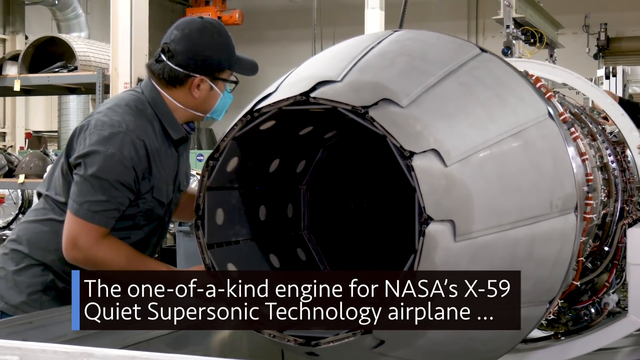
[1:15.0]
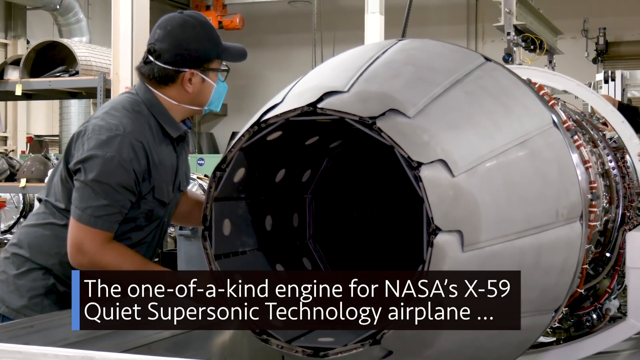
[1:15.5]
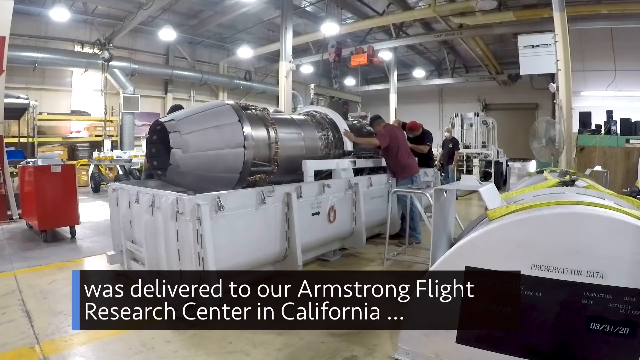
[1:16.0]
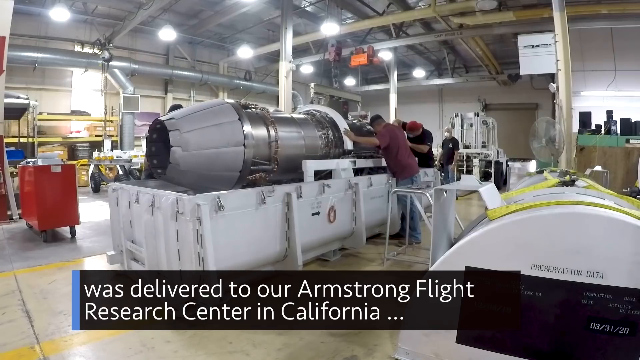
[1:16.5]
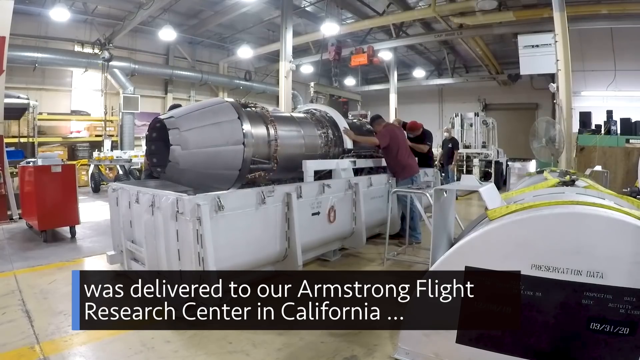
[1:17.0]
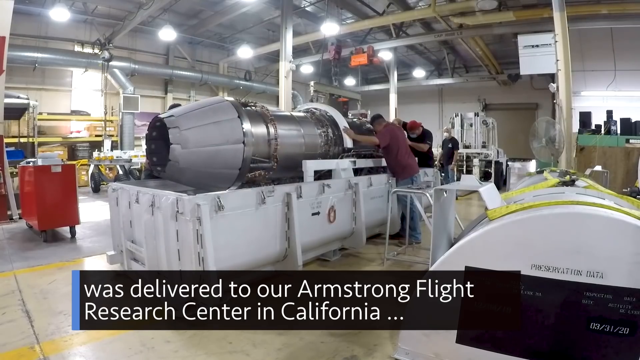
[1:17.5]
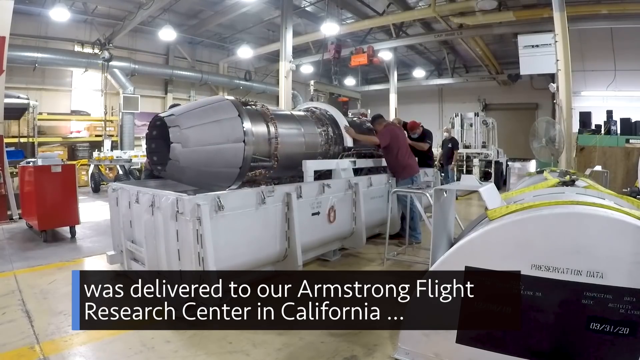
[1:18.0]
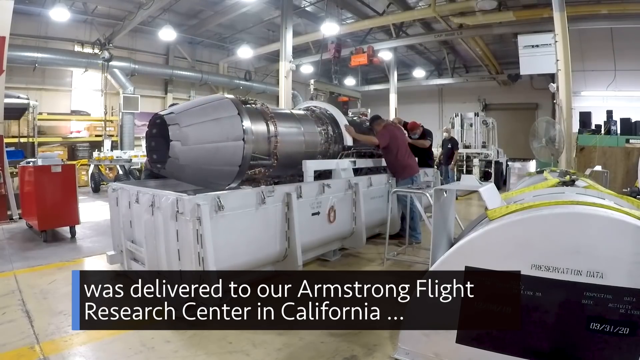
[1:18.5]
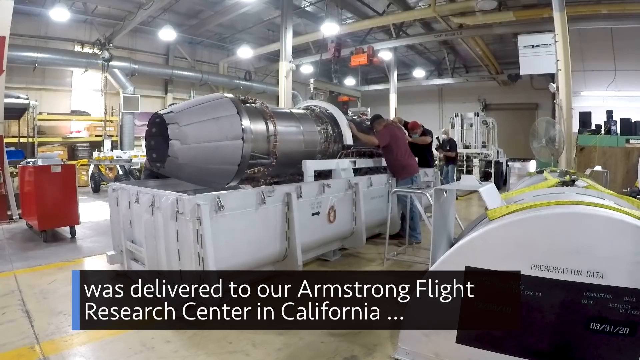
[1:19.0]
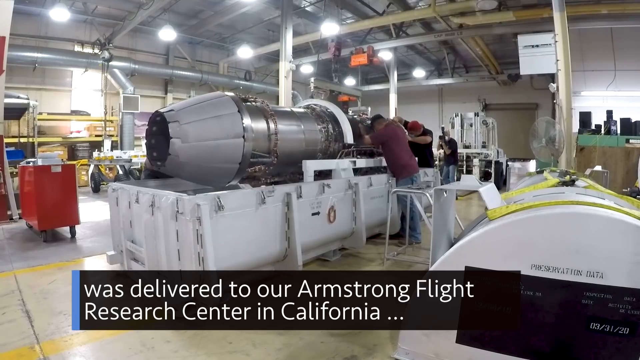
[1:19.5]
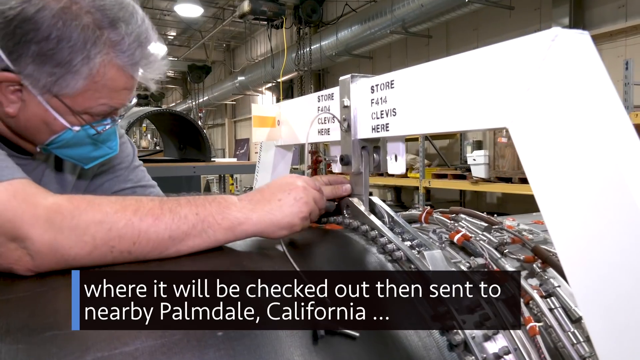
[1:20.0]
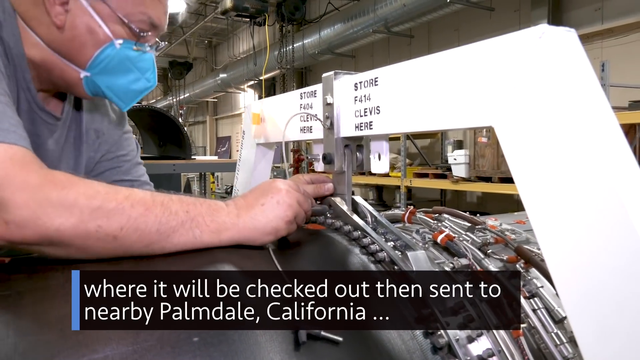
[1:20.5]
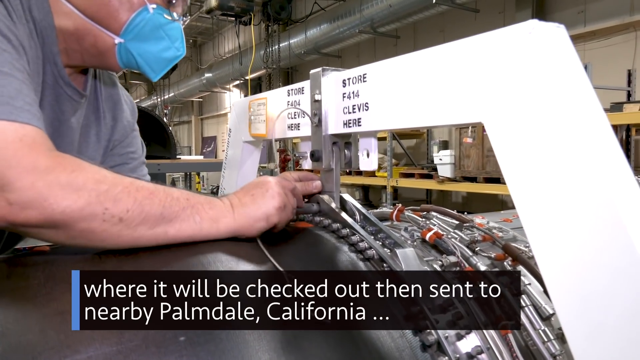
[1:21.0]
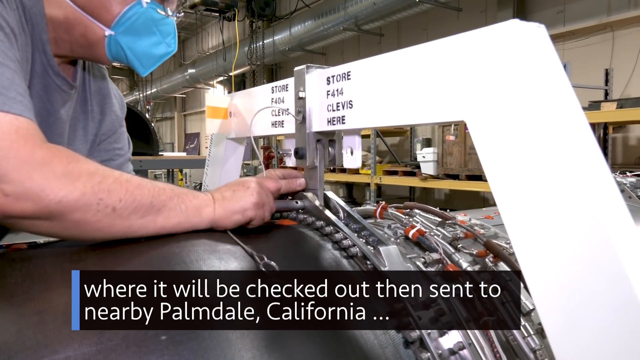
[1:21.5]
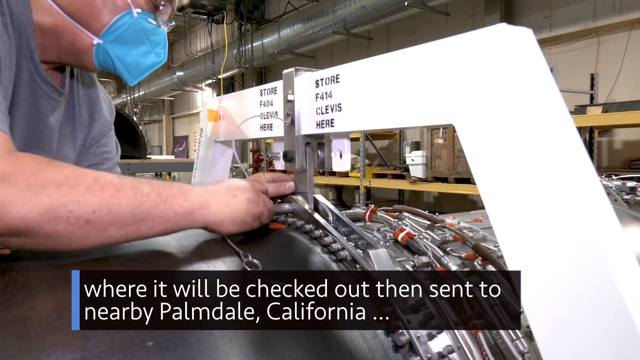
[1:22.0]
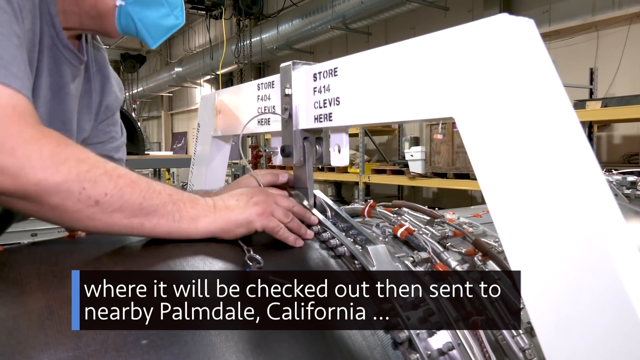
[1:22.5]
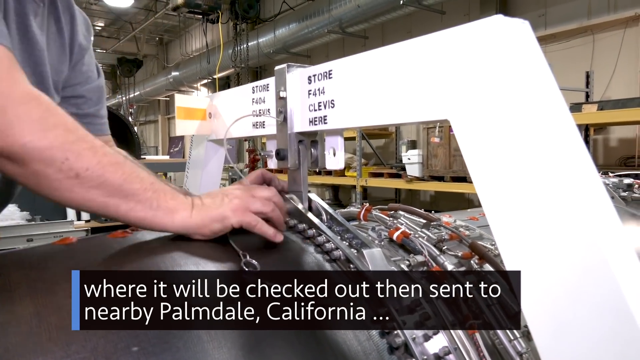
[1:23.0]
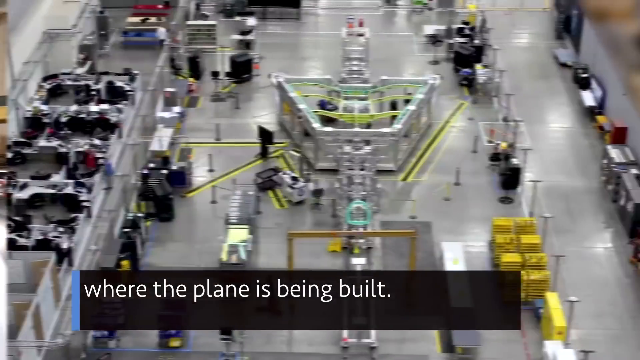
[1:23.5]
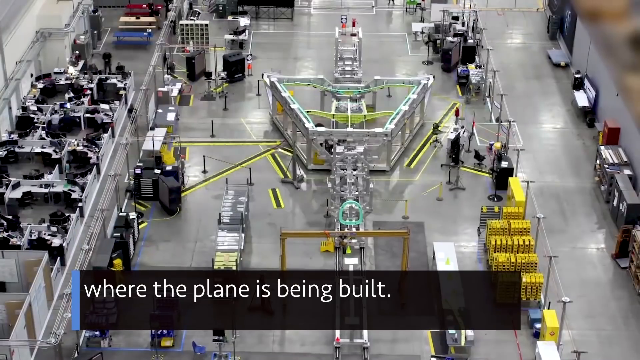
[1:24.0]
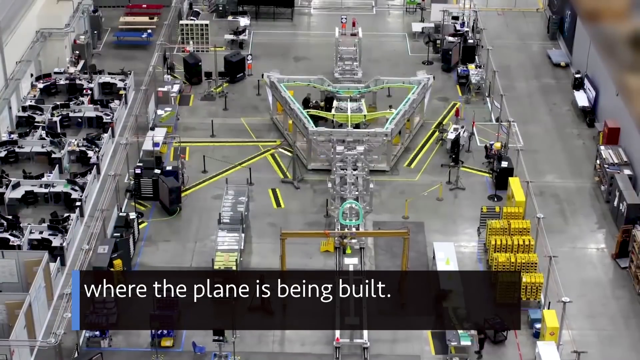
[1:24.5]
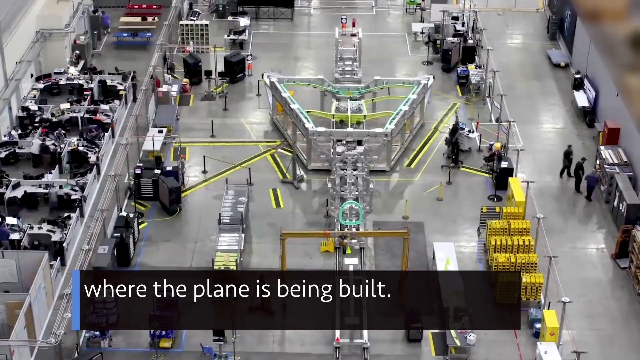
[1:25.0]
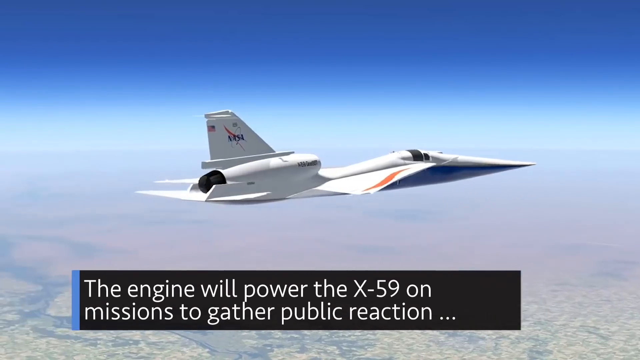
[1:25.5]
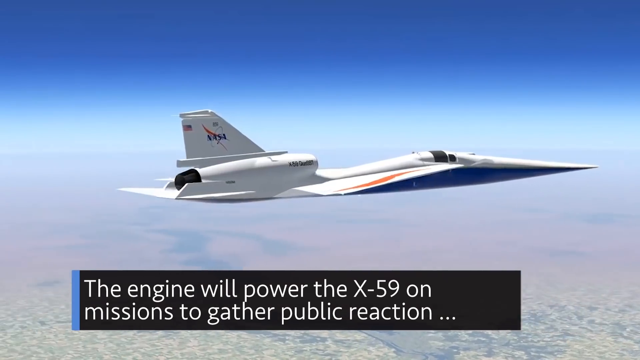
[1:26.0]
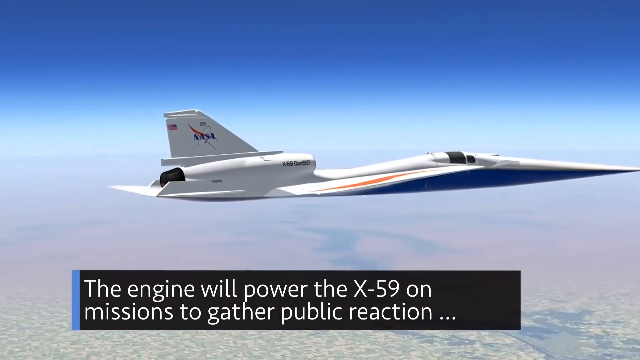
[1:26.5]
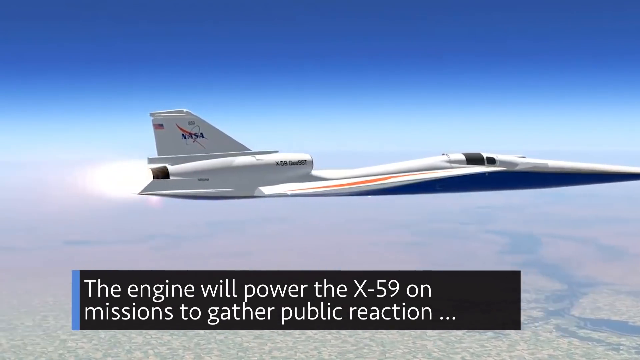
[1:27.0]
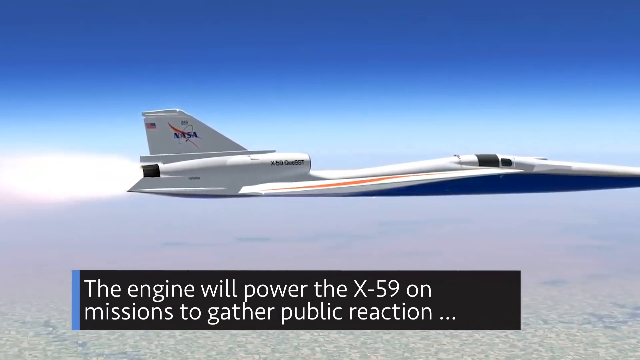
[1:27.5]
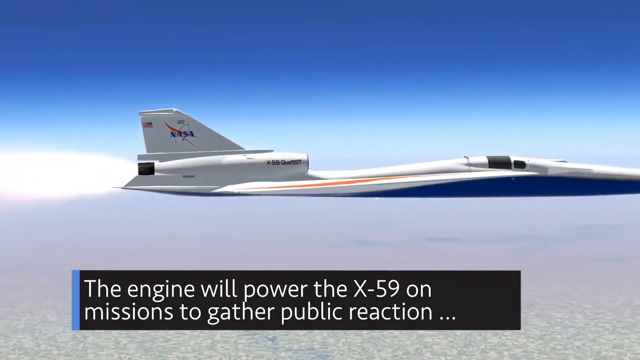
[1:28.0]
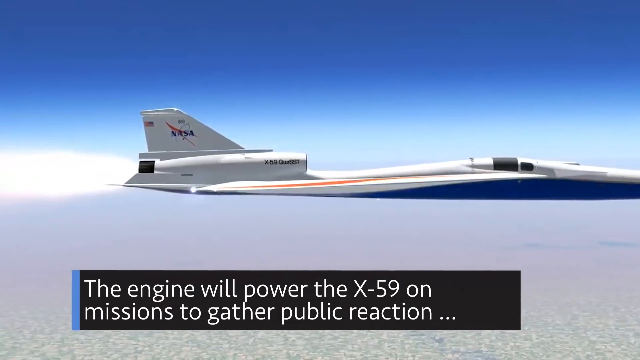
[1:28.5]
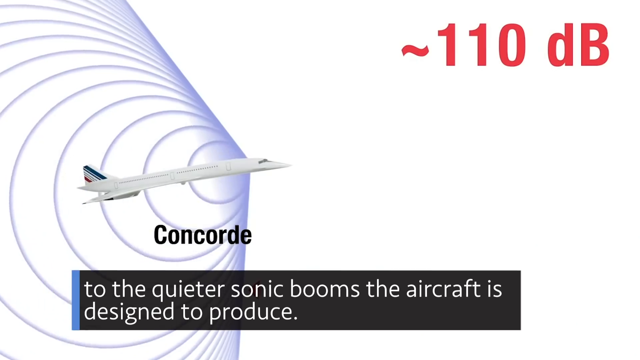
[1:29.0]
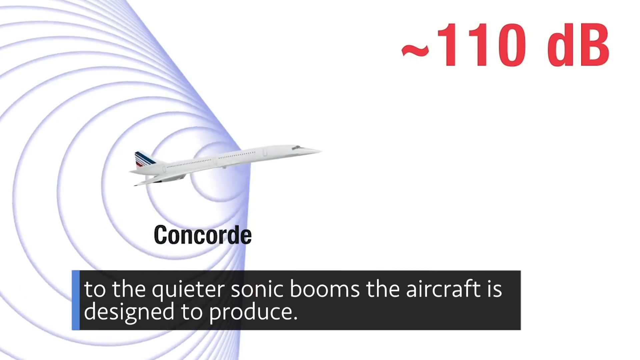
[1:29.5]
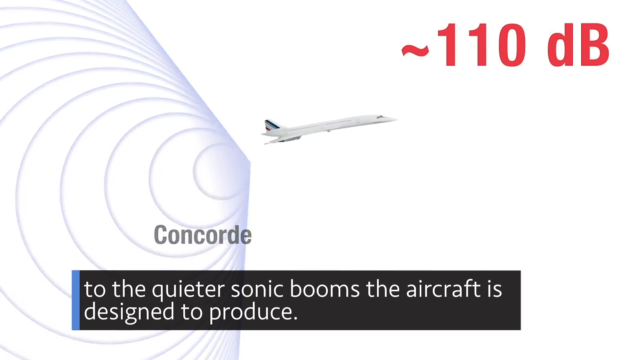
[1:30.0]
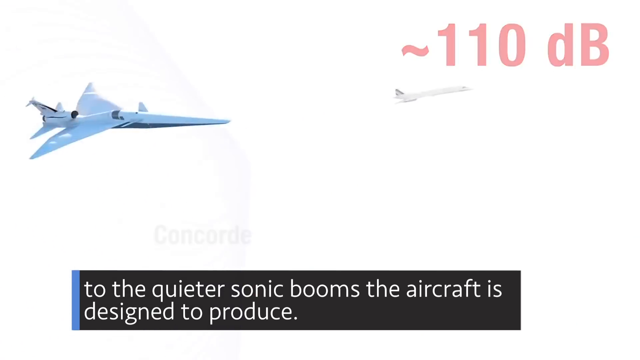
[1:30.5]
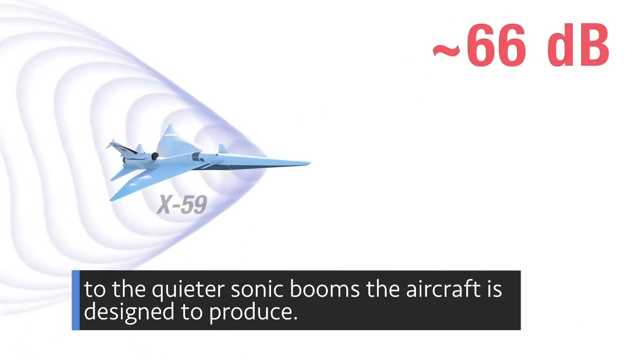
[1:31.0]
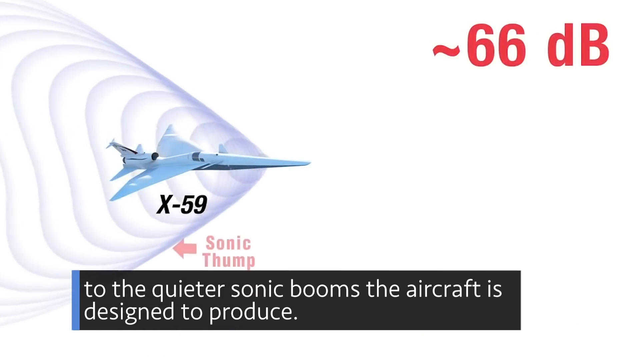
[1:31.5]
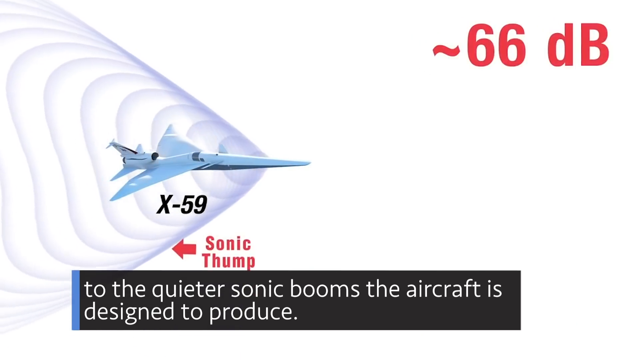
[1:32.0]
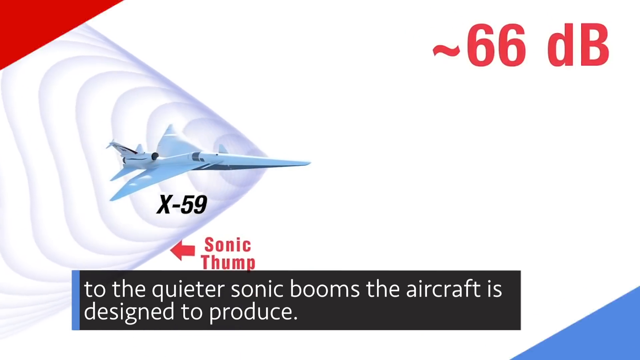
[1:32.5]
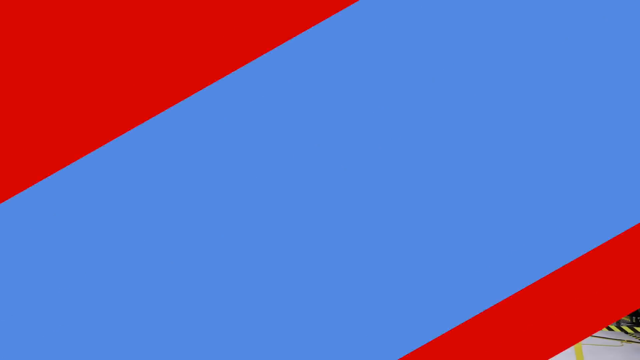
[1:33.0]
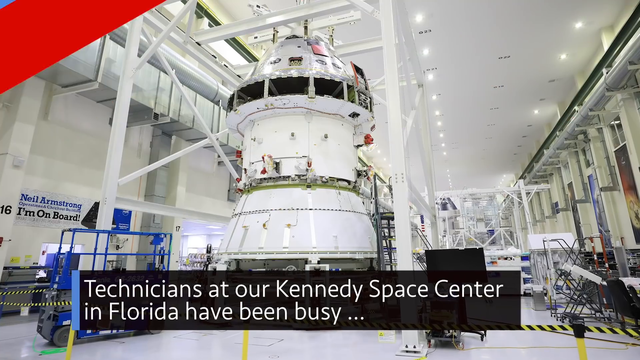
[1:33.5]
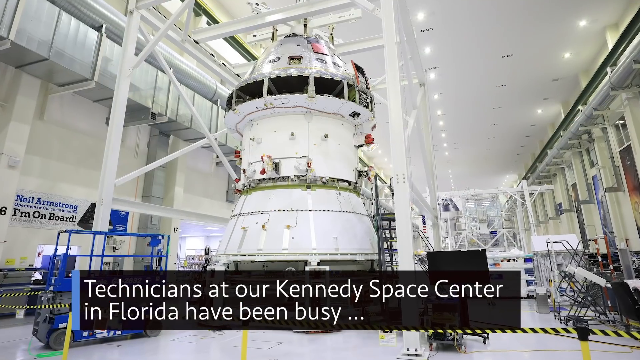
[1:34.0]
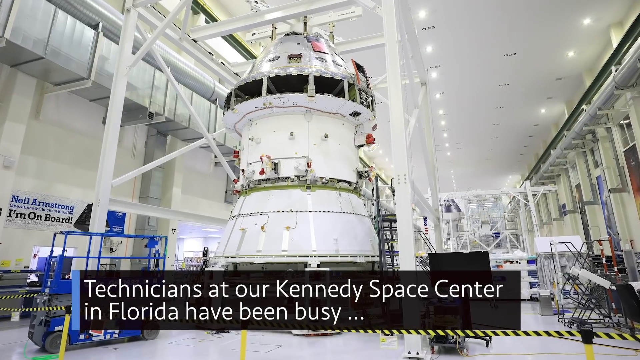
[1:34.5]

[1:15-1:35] An engineer, apparently at NASA, is putting the piece of the ship together. Another scene of the ship piece shows two people working on it: a man in a red shirt and a man in a black shirt with a red ball cap. The banner at the bottom reads "was delivered to our Armstrong Flight Research Center in California." The scene changes to a white man, maybe about 55 years old, wearing a blue mask and glasses, attaching the piece to a white overhang, with the banner "where it will be checked out and sent to nearby Palmdale, California." An overview of the manufacturing floor follows, showing a lot of metal machinery pieces and some yellow boxes, with the text "where the plane is being built." Then a generated image of the NASA supersonic airplane appears with the banner "the engine will power the X-59 on missions to gather a public reaction." Another generated image shows the plane flying, with what look to be sound waves behind it labeled "Concorde," and the bottom banner reads "to the quiet sonic booms the aircraft is designed to produce."